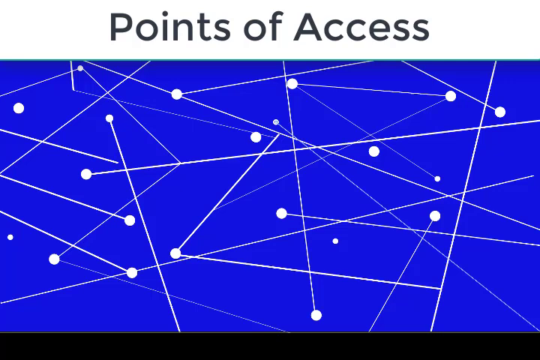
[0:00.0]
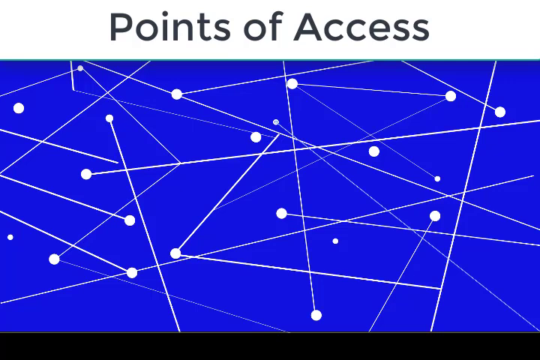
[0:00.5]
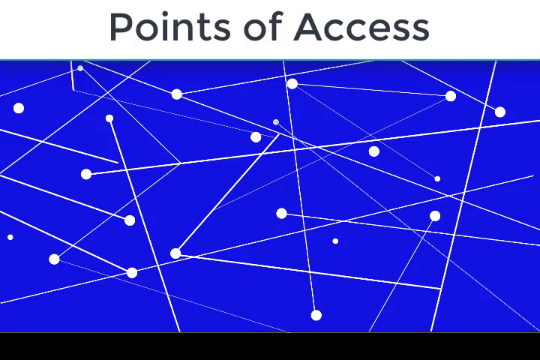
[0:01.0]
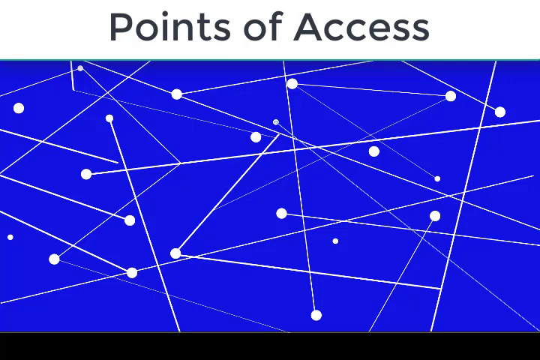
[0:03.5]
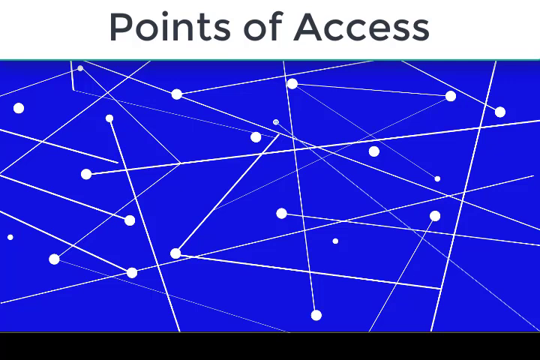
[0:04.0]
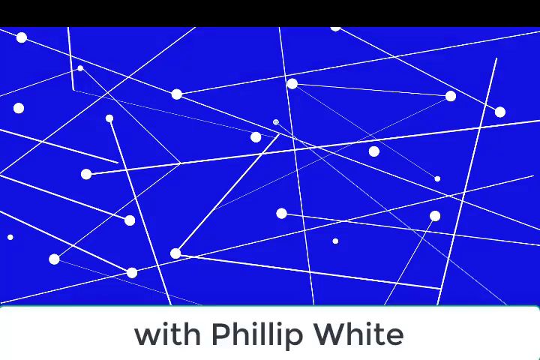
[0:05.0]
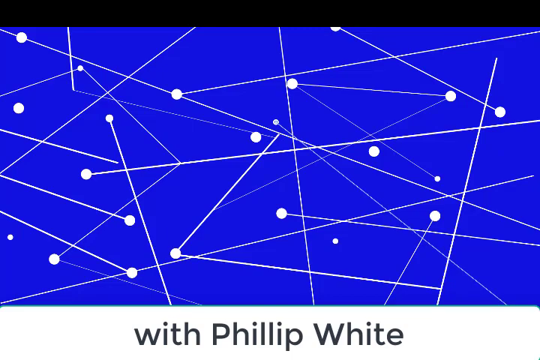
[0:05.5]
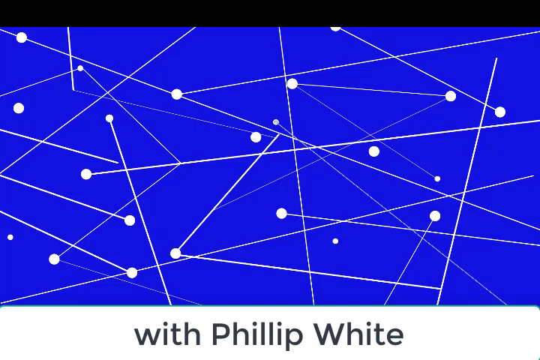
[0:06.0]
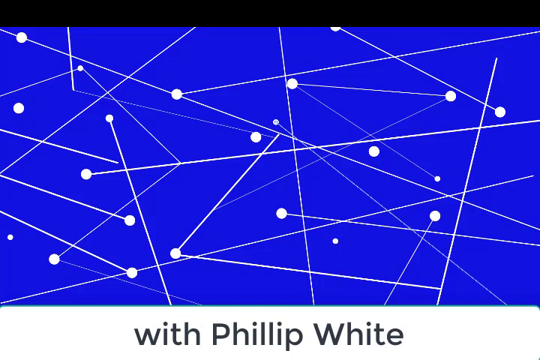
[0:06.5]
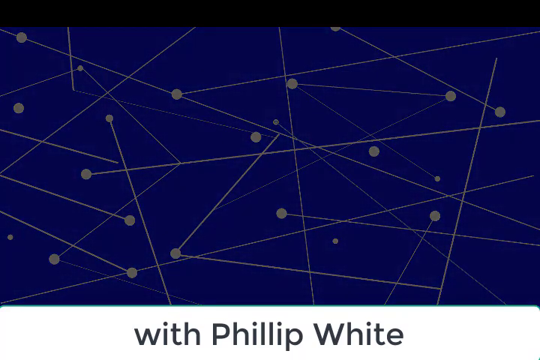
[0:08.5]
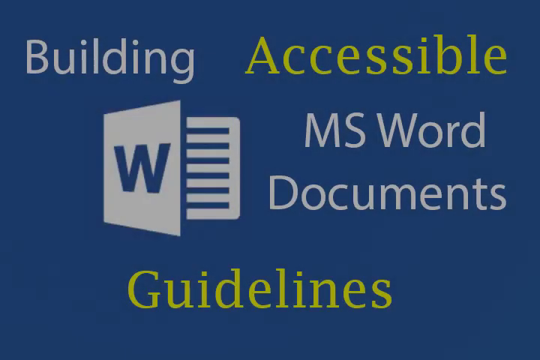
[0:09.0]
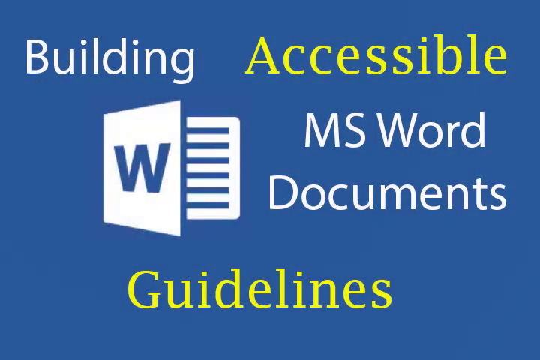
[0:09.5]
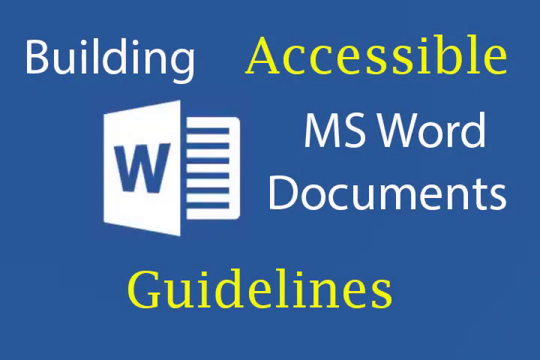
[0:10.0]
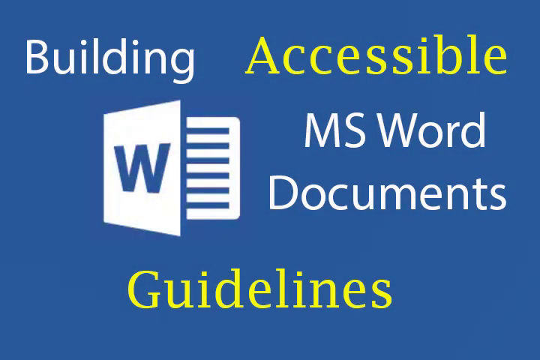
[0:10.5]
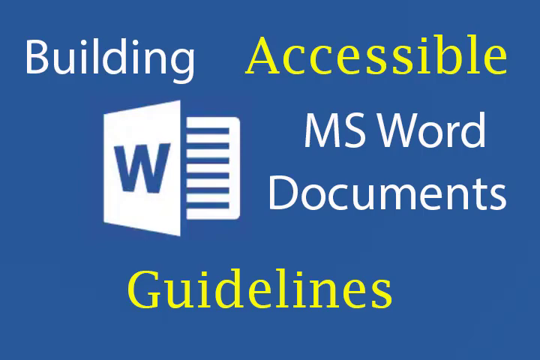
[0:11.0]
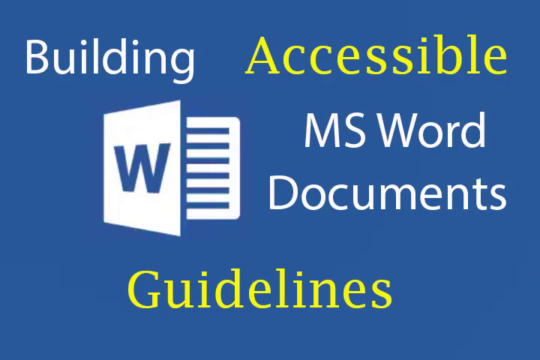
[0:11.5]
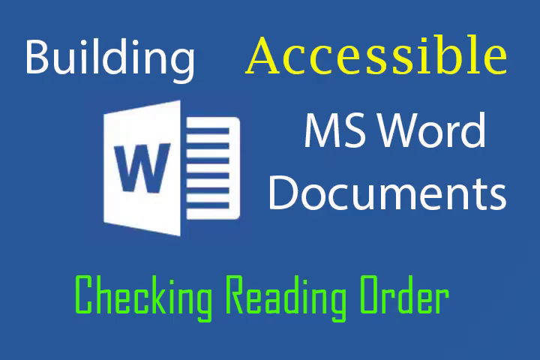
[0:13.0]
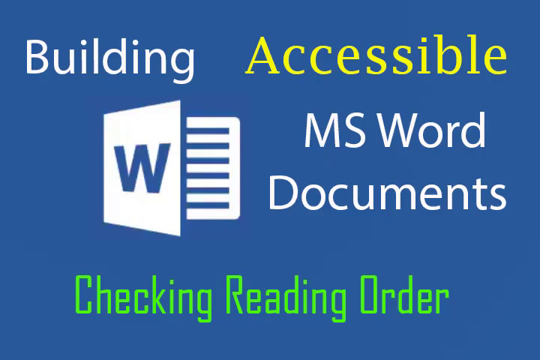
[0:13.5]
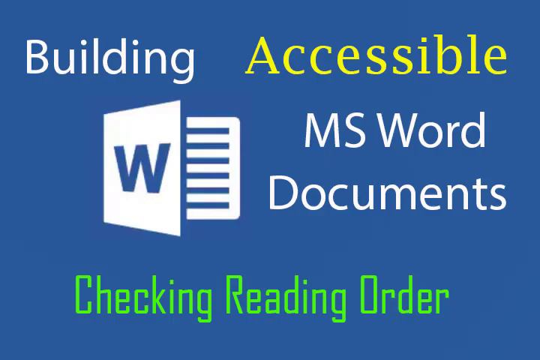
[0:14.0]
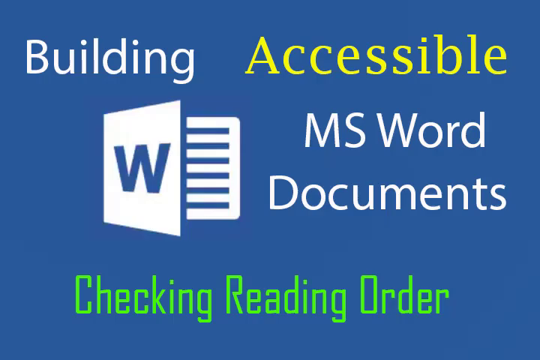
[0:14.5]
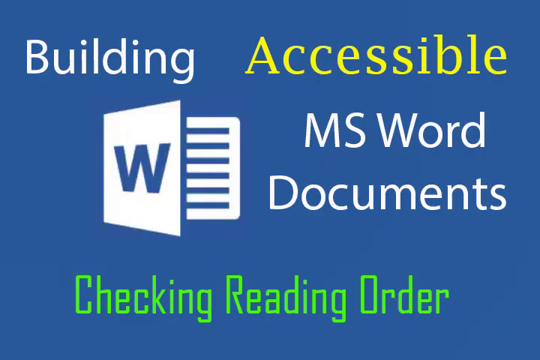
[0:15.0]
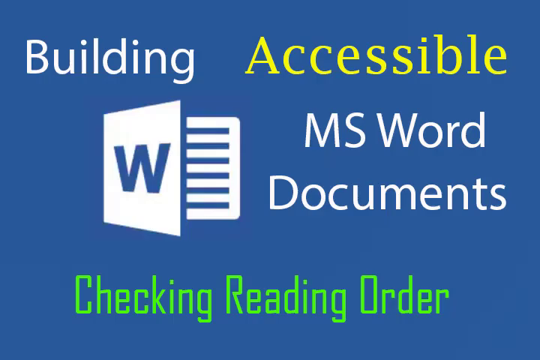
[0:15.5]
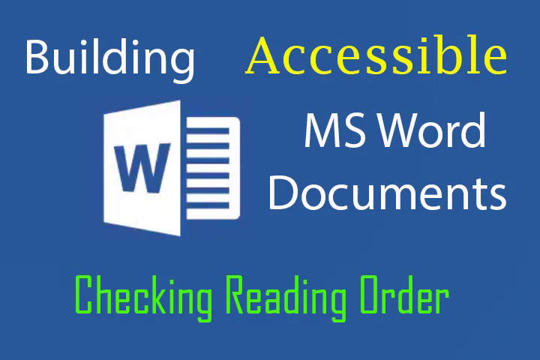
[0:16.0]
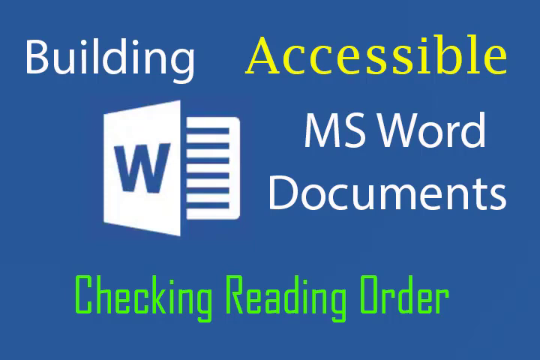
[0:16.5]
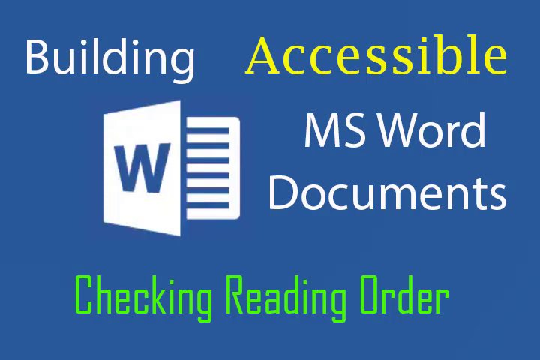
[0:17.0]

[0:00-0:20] The video opens on a screen with a white header taking up maybe the top 20% of the screen, containing black text in a plain font that reads "points of access". Below it is a blue field with a mild gradient toward the bottom, maybe 20% of the screen; the gradient gets darker to give an illusion of depth. On the blue field are thin white straight lines in a zigzagging pattern, with dots in various spots at the ends of the lines or marking places where the lines turn. This holds for a few seconds. Then the top of the screen changes to a black bar, like a letterboxing bar, and the bottom of the screen changes to white, like a footer, with the gradient now over the footer rather than the field. Text reading "with fill of white" appears in black, in the same font as the original header. After a transition, the screen changes to a blue field with the same gradient, with text reading "building" in white and "accessible" in yellow. A clipart-style Microsoft Word logo appears that looks like a book opening, with a W on the cover and lines representing text on the open page beneath. In white it says "MS Word Documents", and beneath that in yellow it says "Guidelines". This stays on screen for a little while. After a flip transition, the top part of the screen stays the same, but the bottom now says "checking reading order" in a different font, and this remains on screen.